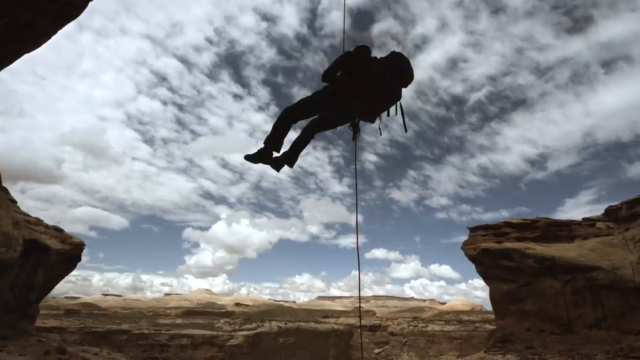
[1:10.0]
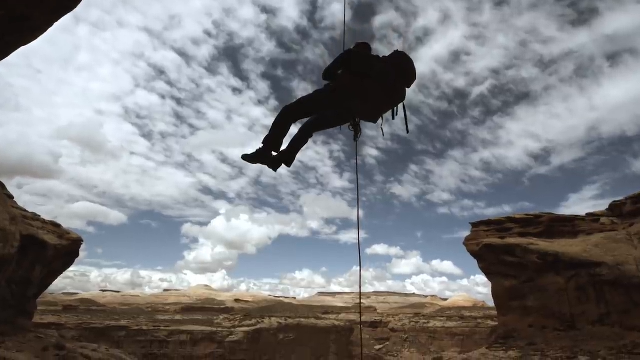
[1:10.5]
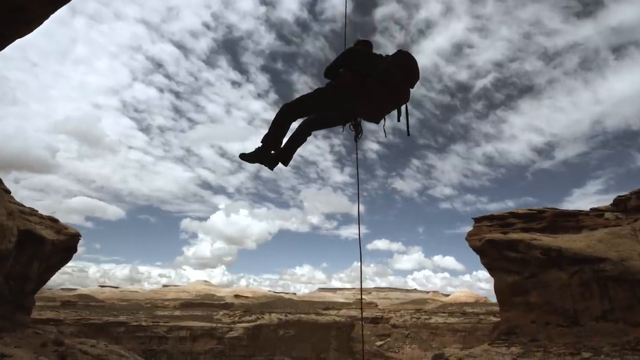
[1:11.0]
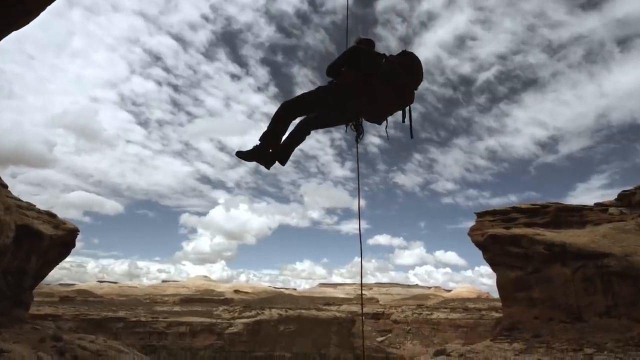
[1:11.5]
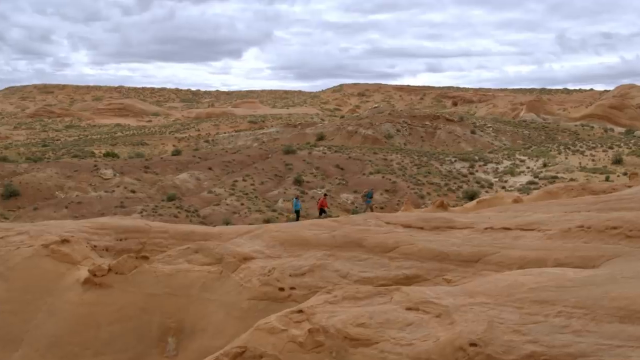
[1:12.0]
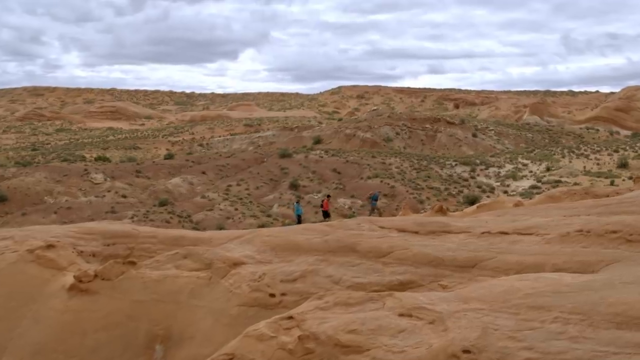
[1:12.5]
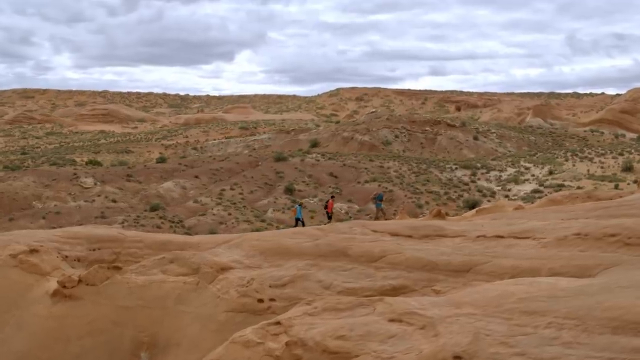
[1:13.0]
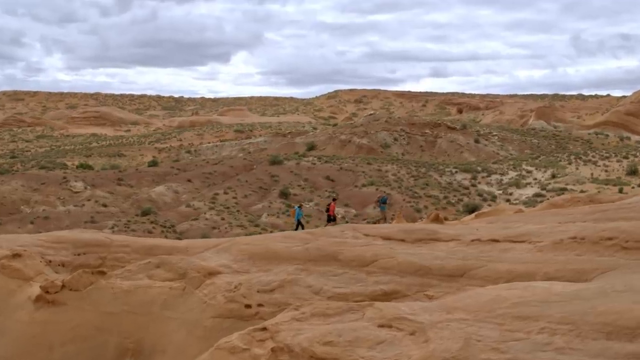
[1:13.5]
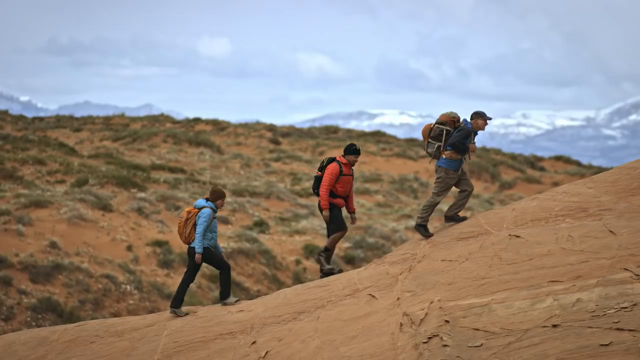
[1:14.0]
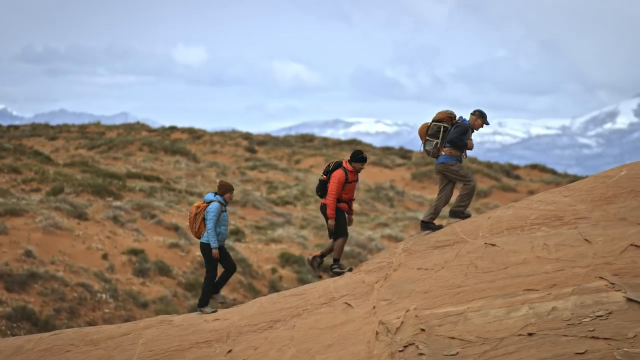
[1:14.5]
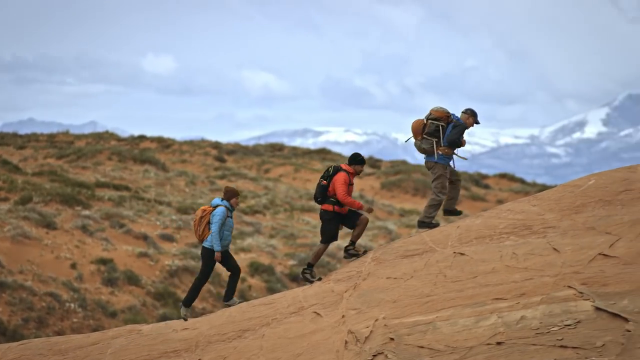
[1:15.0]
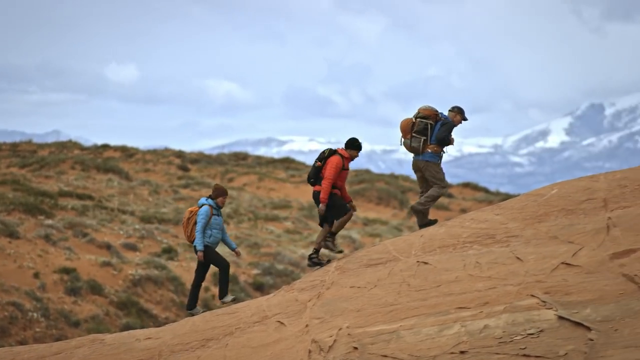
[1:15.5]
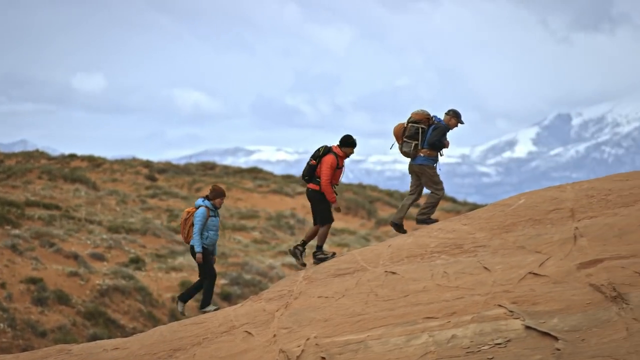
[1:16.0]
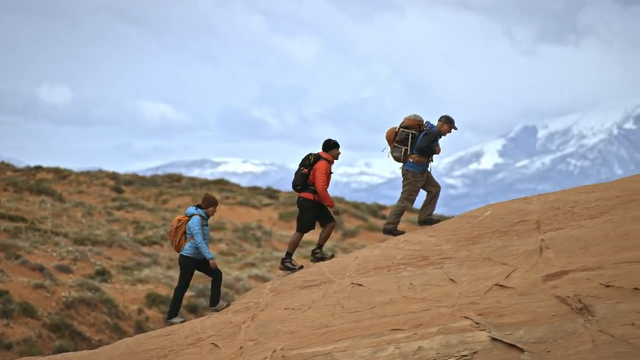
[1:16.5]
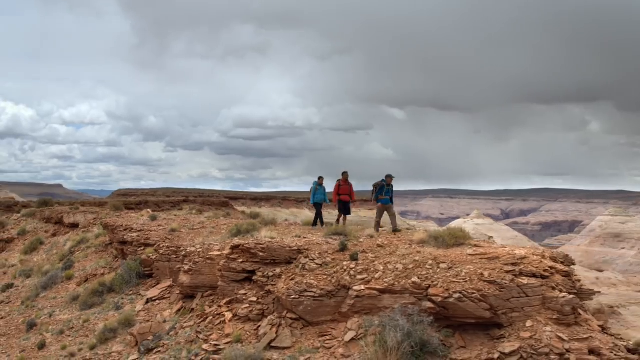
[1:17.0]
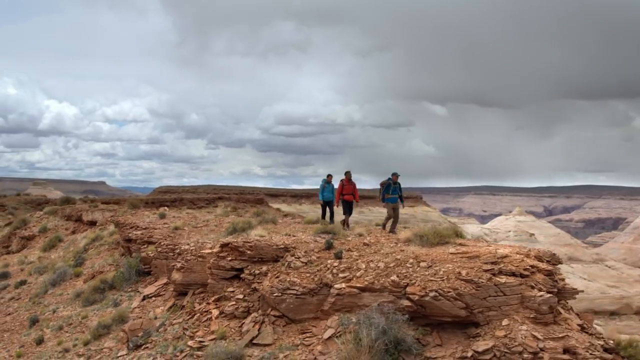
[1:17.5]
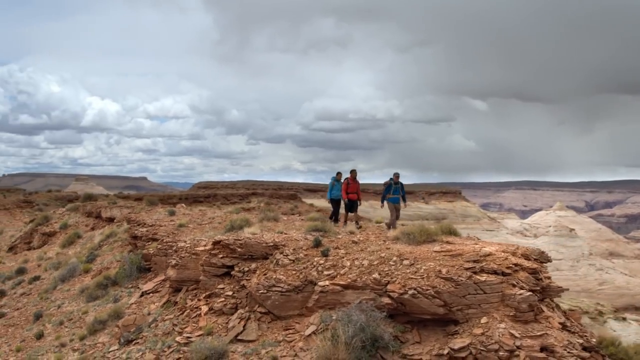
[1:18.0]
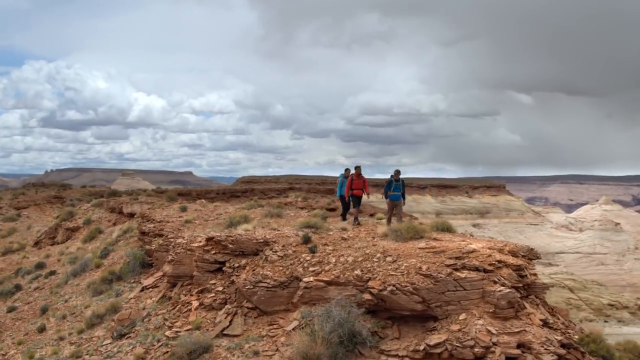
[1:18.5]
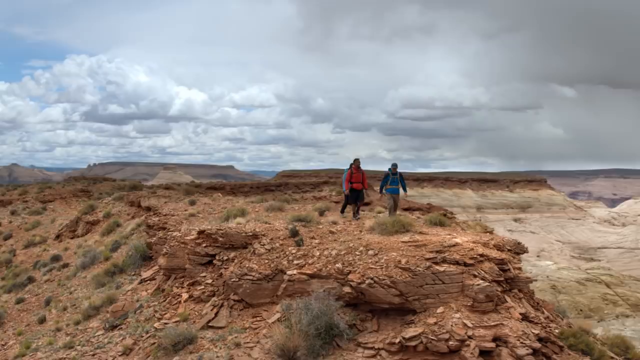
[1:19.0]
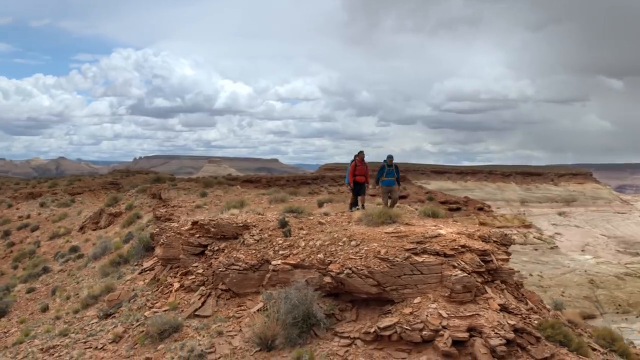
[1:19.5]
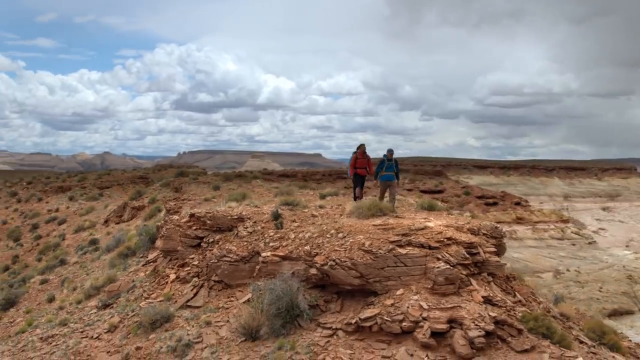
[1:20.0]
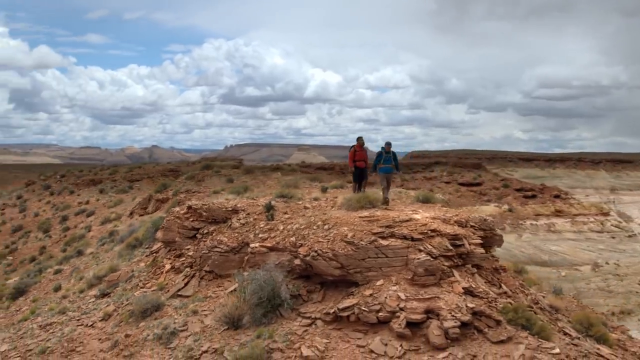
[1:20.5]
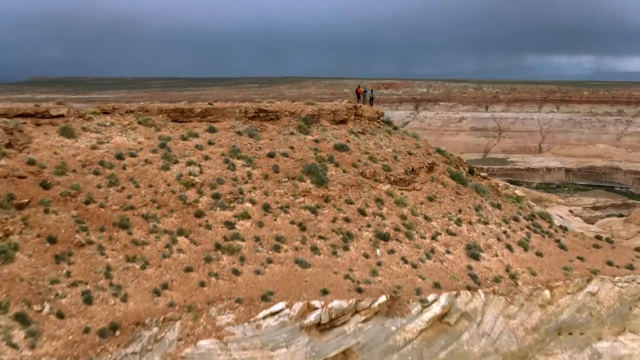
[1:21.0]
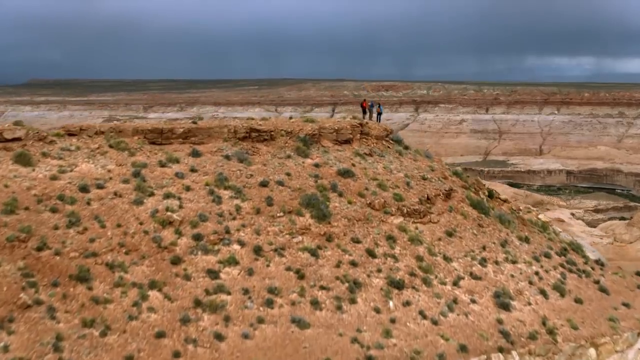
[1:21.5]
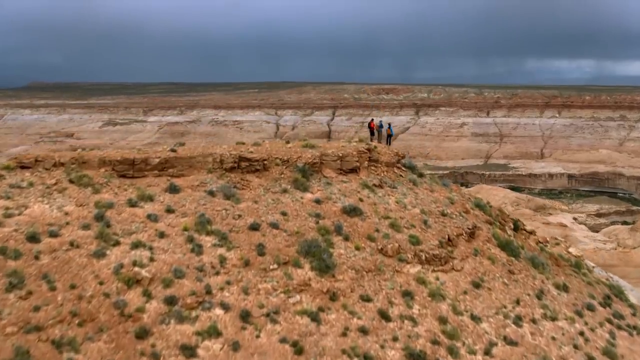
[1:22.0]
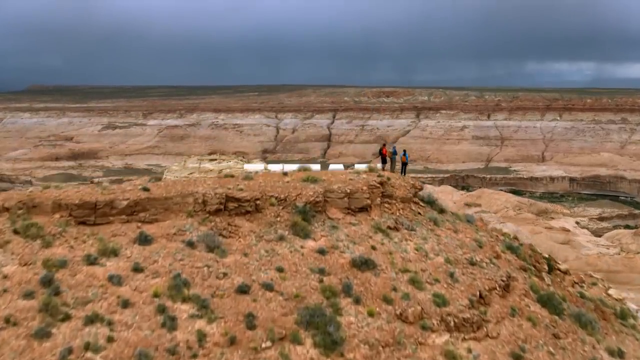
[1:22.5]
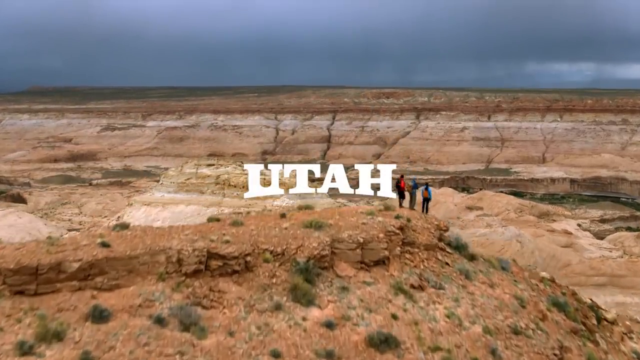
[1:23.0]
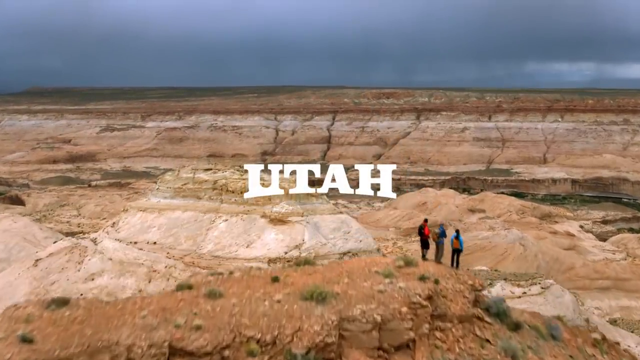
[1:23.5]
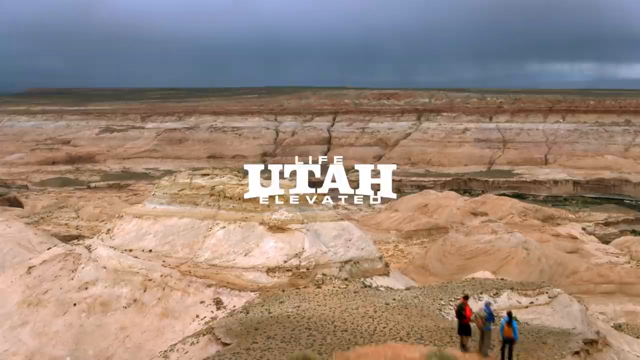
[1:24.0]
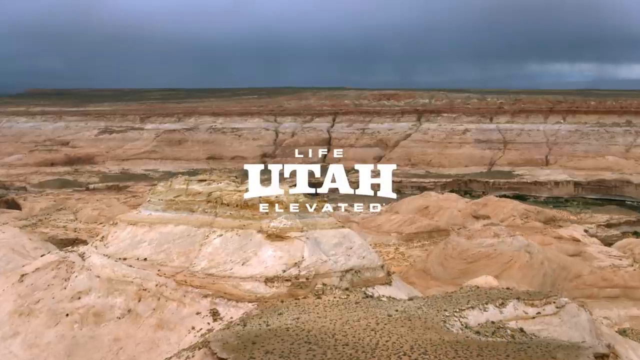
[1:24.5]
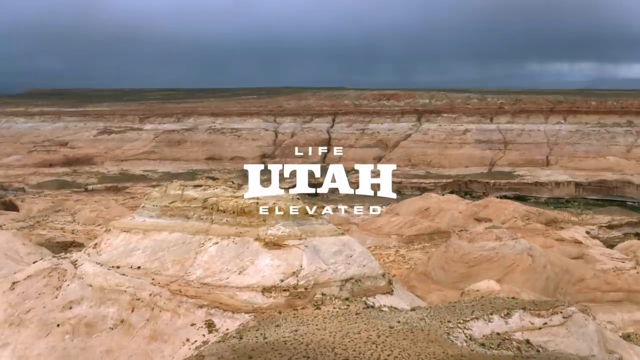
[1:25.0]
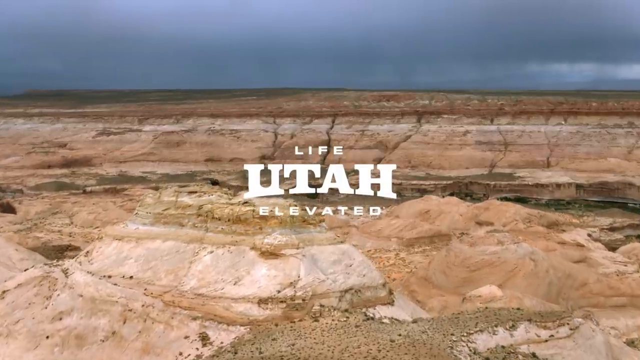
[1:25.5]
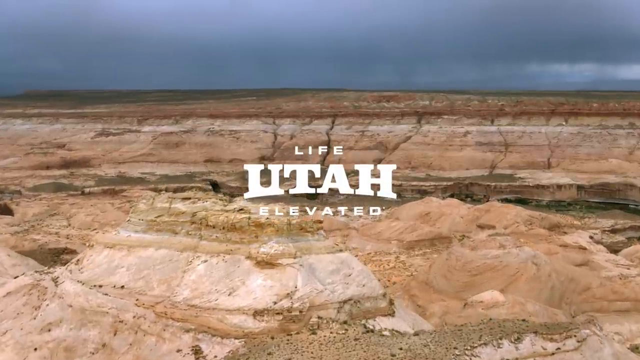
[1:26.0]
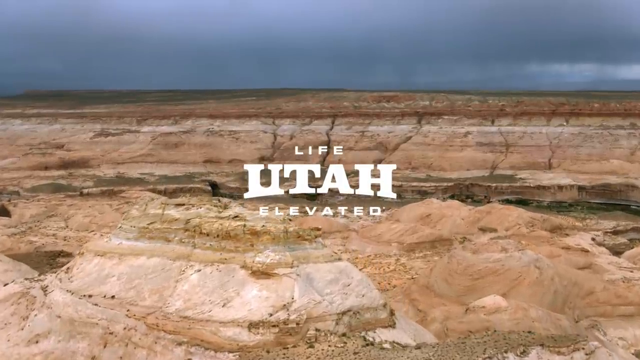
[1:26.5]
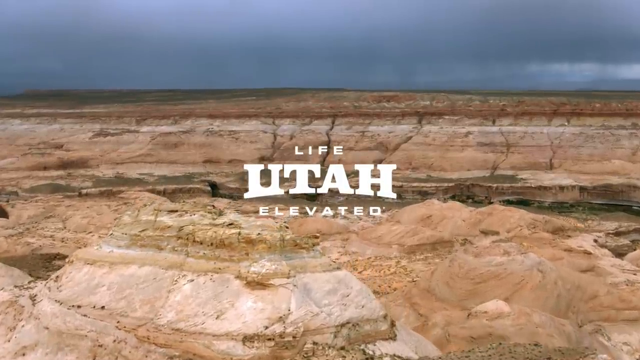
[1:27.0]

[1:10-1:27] The three people, including a man and a woman, walk through the canals. They look like they are enjoying their lives.